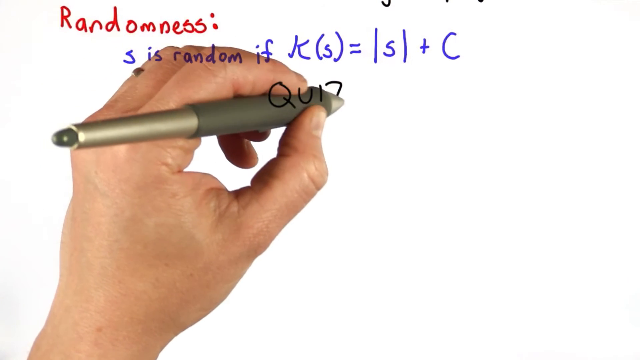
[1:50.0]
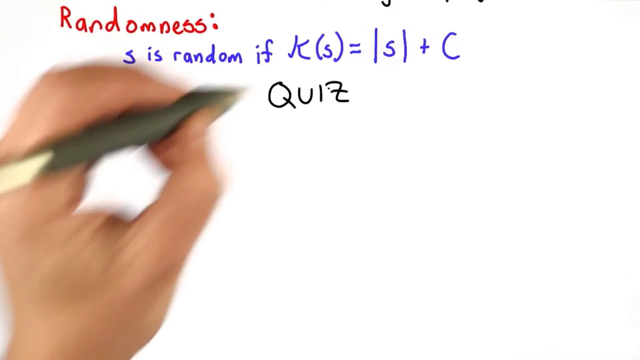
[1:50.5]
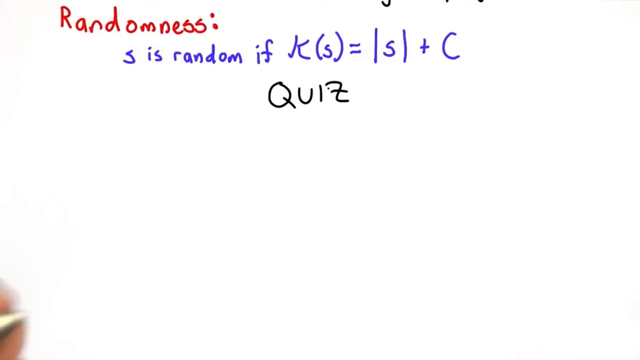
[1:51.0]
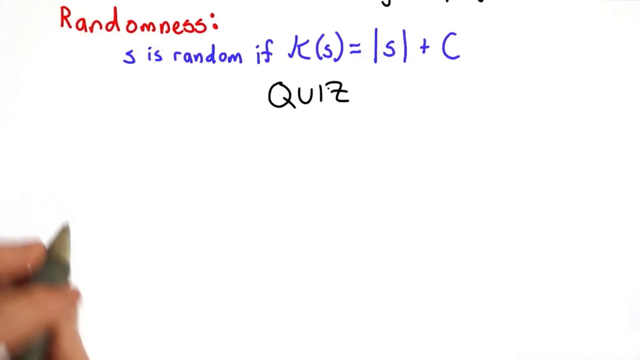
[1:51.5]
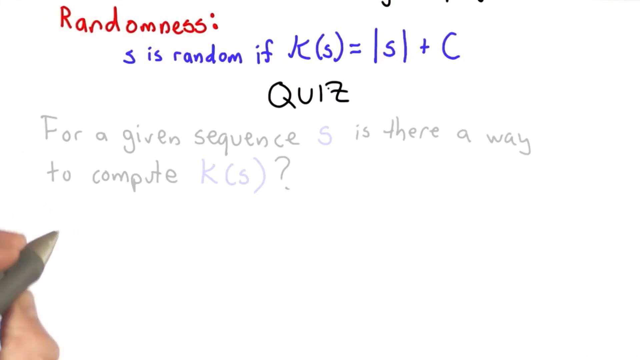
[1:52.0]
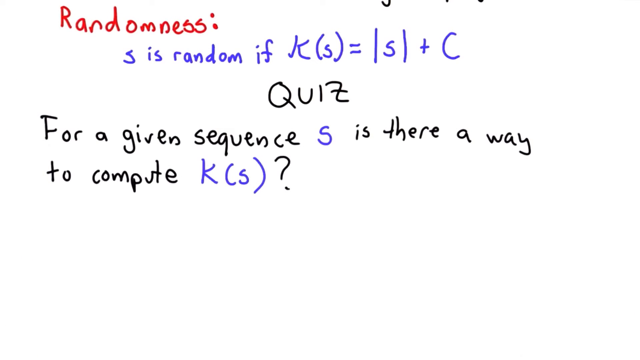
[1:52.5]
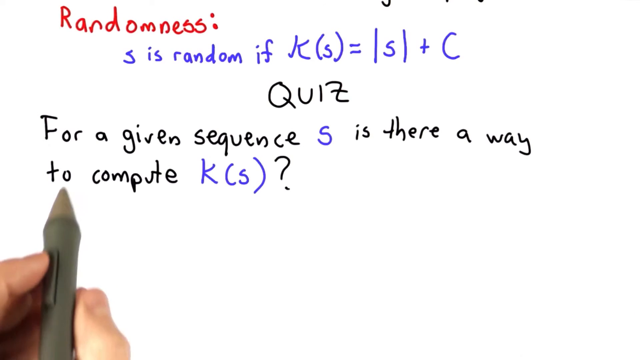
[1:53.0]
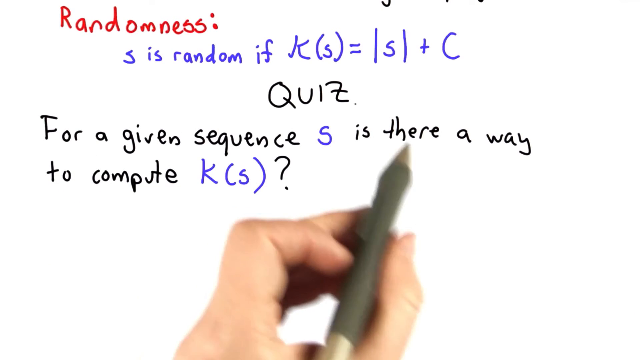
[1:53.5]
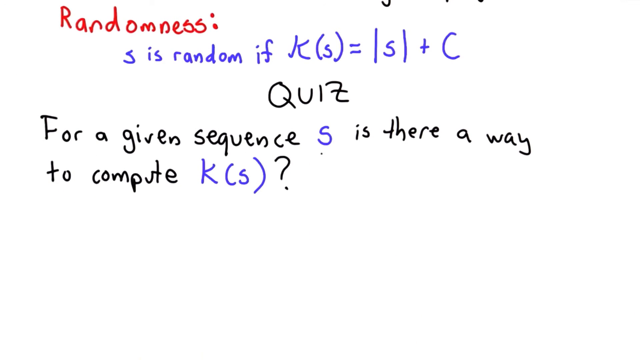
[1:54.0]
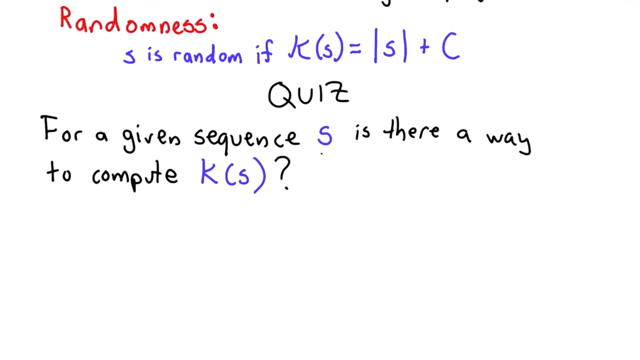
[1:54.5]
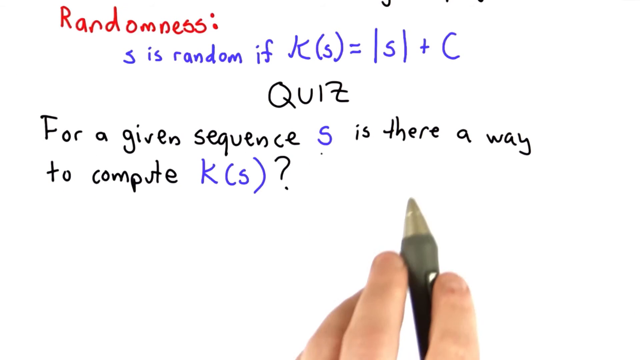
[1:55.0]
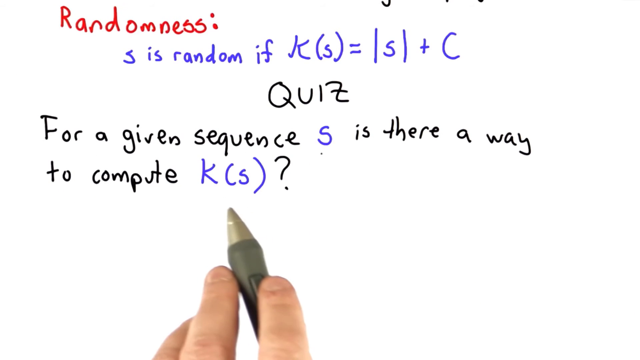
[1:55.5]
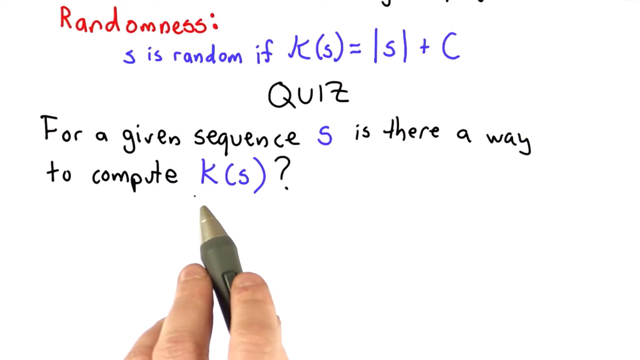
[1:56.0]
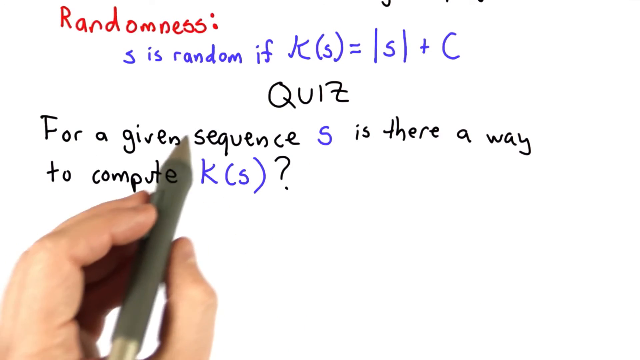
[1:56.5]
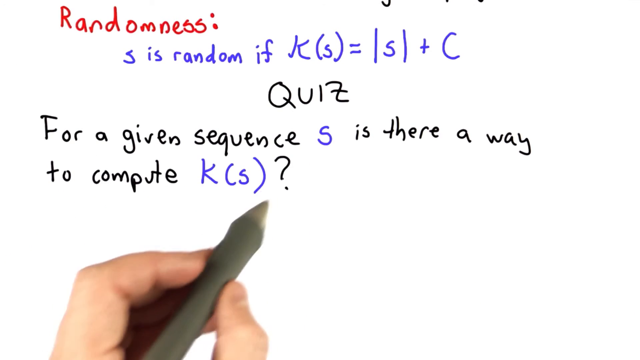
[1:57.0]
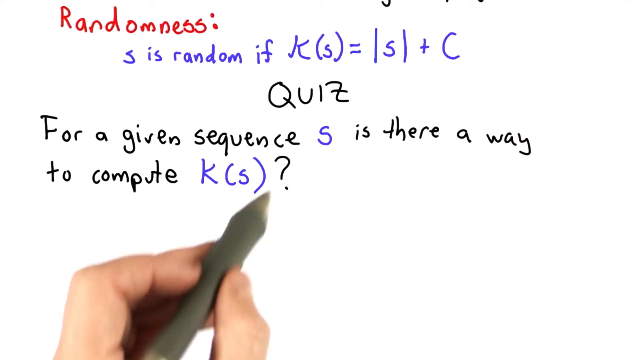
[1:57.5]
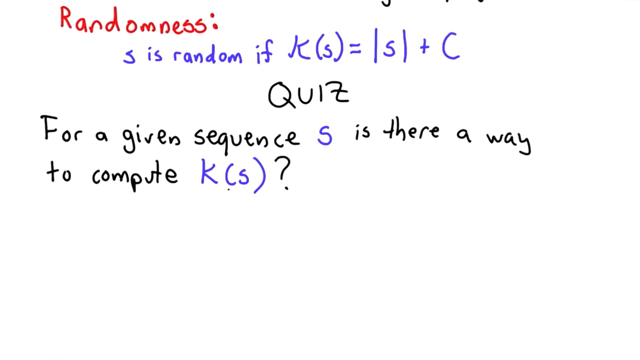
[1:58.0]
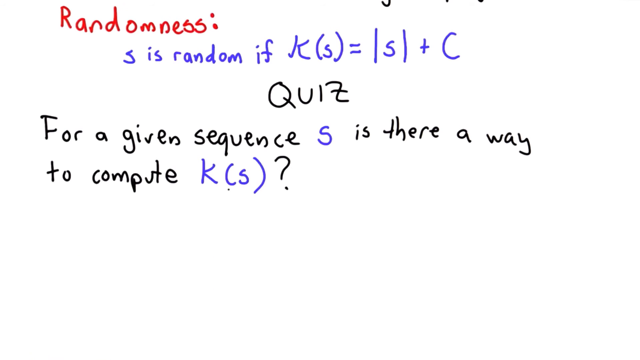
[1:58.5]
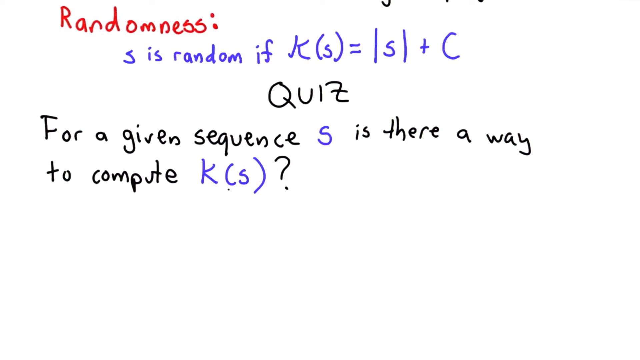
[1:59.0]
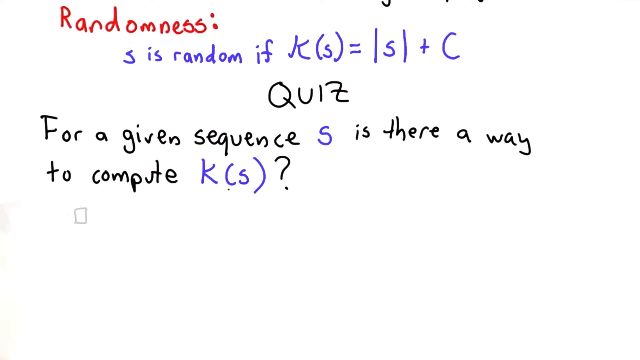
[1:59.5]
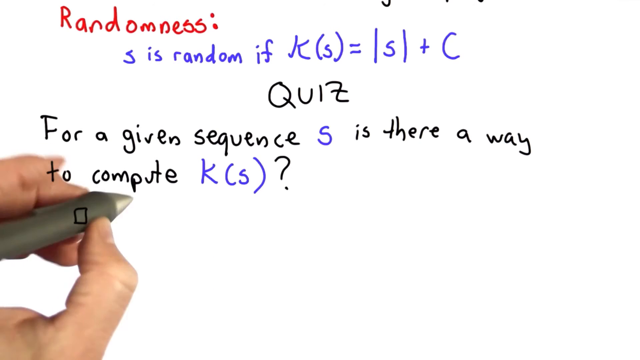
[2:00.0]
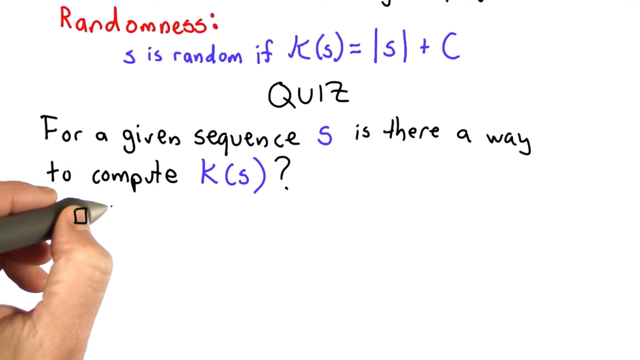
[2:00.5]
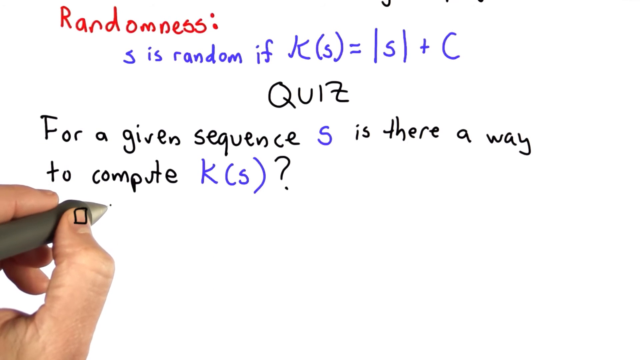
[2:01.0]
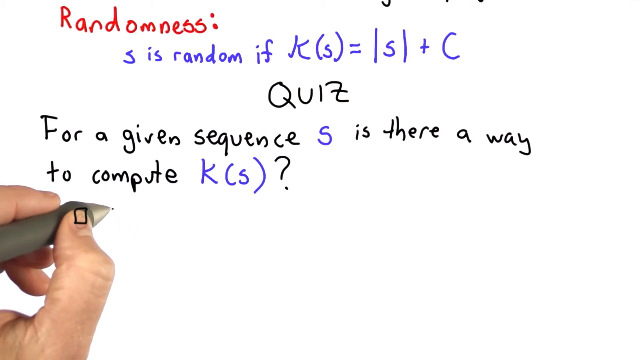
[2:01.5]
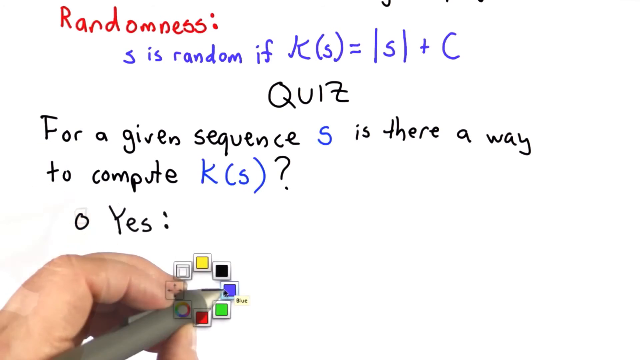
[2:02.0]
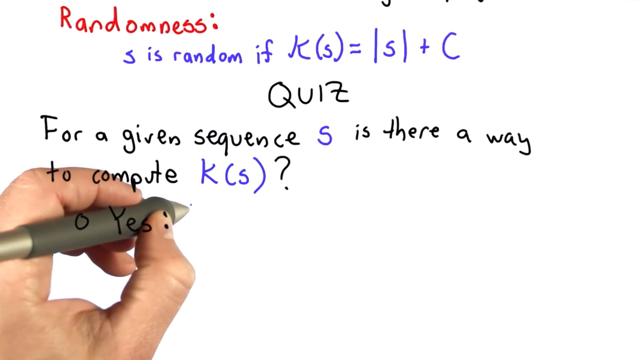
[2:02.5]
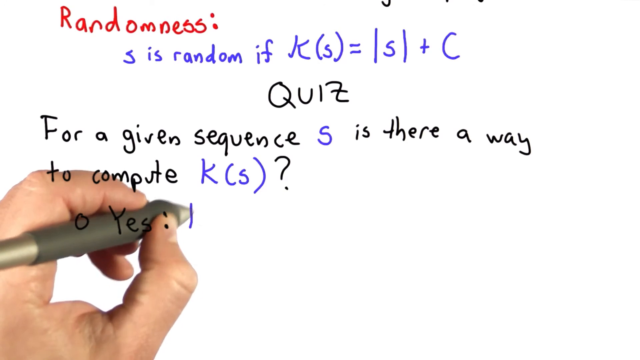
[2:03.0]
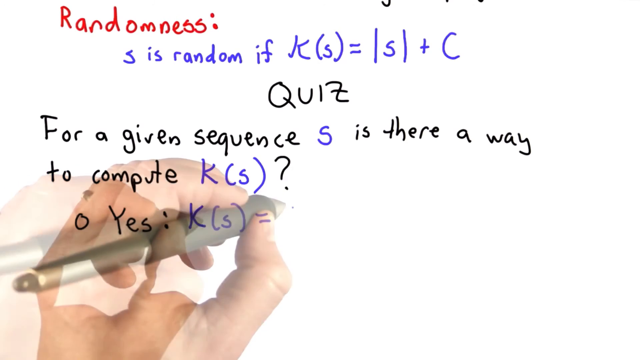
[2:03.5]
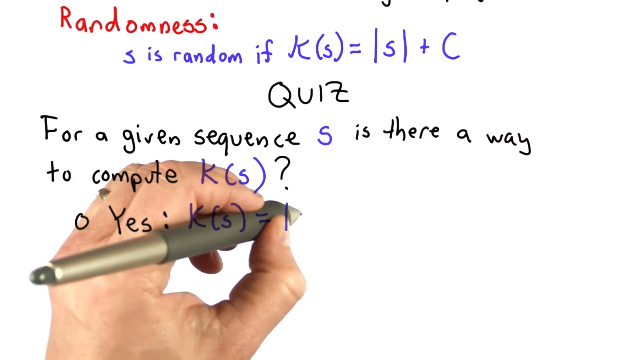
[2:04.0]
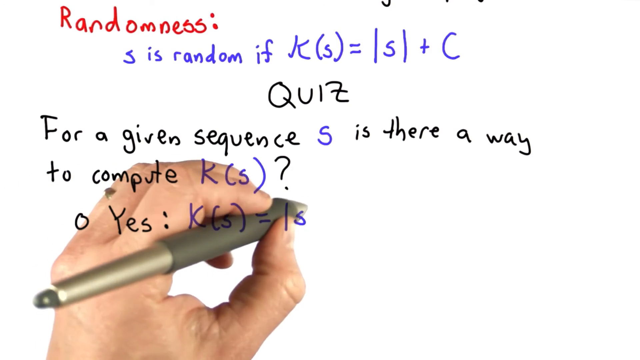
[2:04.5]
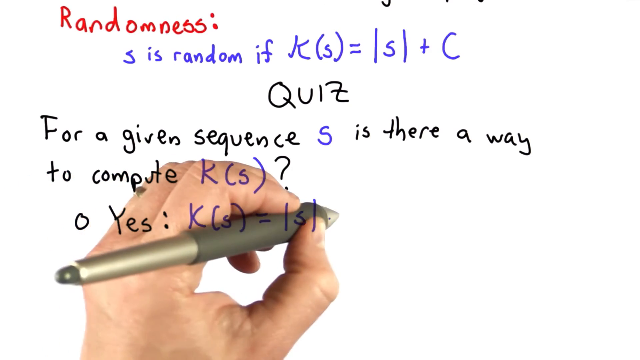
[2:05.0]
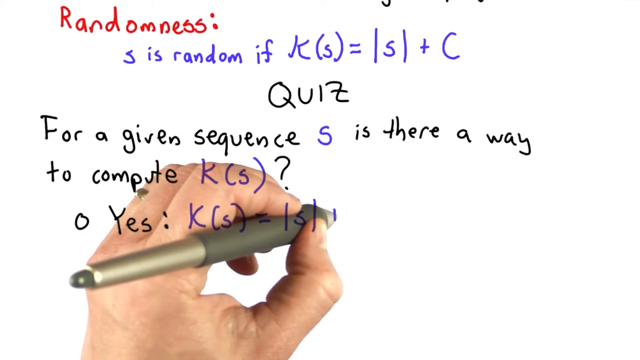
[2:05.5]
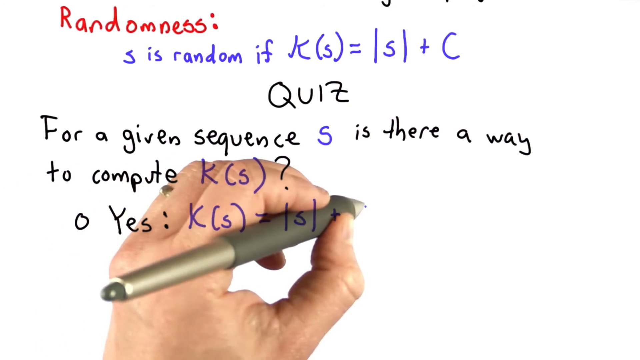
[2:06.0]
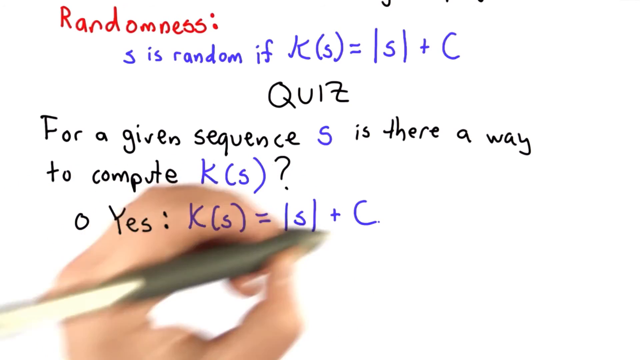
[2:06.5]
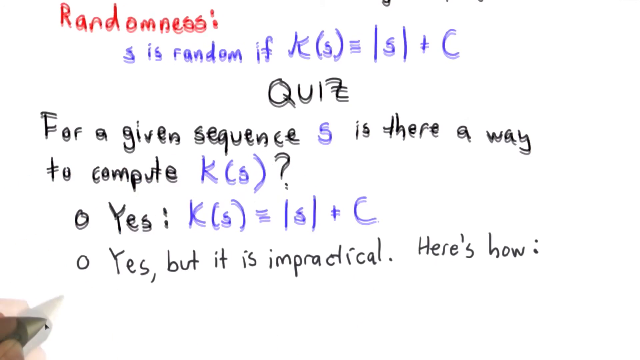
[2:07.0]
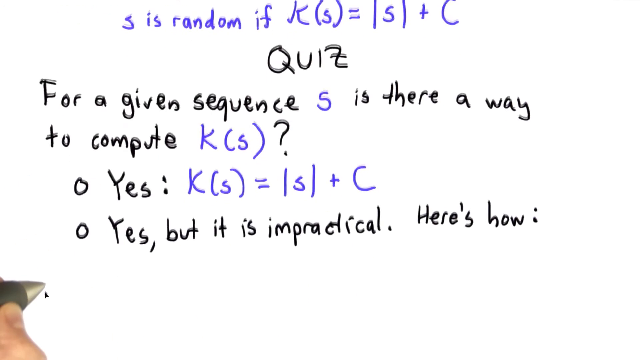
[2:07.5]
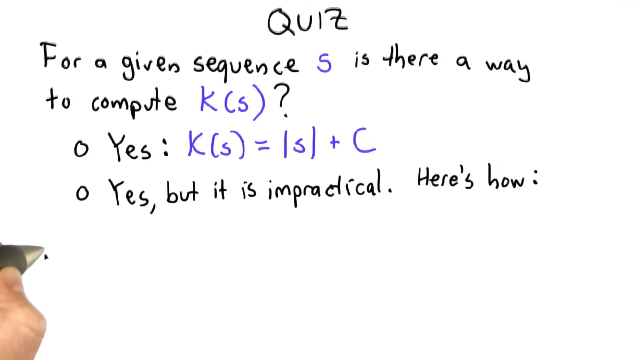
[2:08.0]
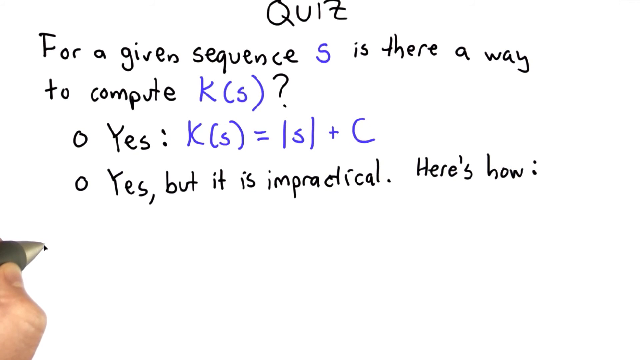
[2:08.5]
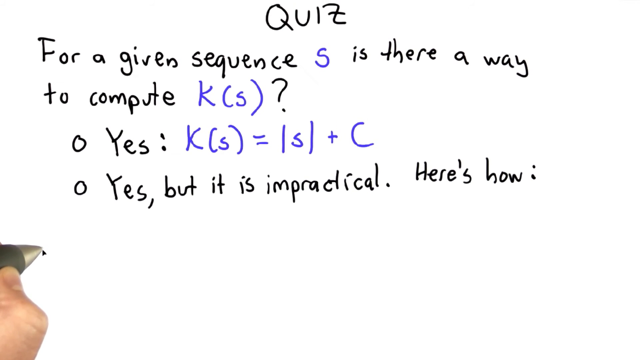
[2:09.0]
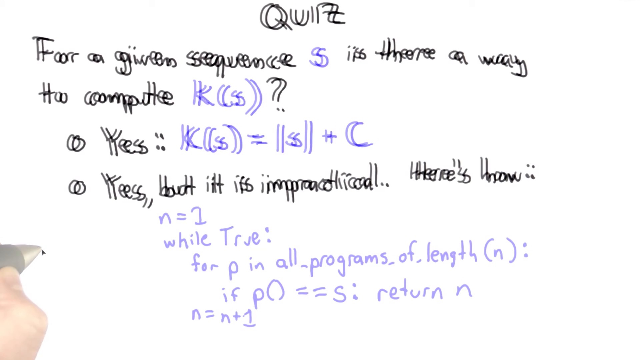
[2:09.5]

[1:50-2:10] The screen is white, with the word "randomness" in red in the top left-hand corner and, underneath it in blue, the statement that S is random if K(s) equals S plus C. A left hand holding a gold-colored pen writes on the screen, and everything appears as it is written. The person writes the word "quiz" in black, and underneath it, in black, appears "for a given sequence S is there a way to compute K(S)?" The person points out the K and the S in parentheses, then writes underneath "yes K(S) equals S plus C," and under that "yes but it is impractical. Here's how." He then scrolls the screen up a little.